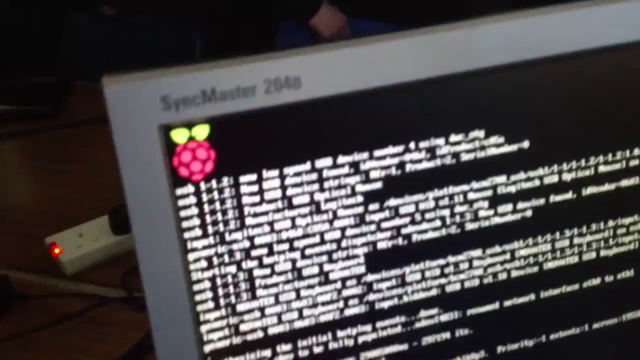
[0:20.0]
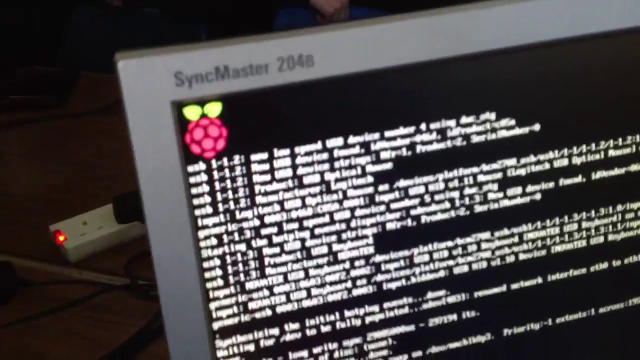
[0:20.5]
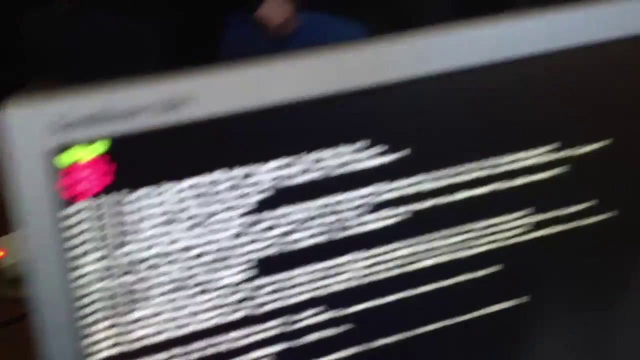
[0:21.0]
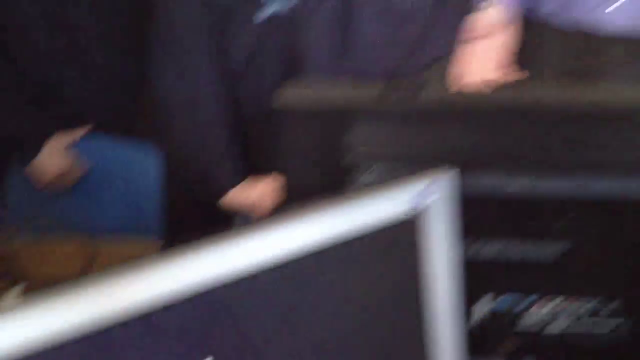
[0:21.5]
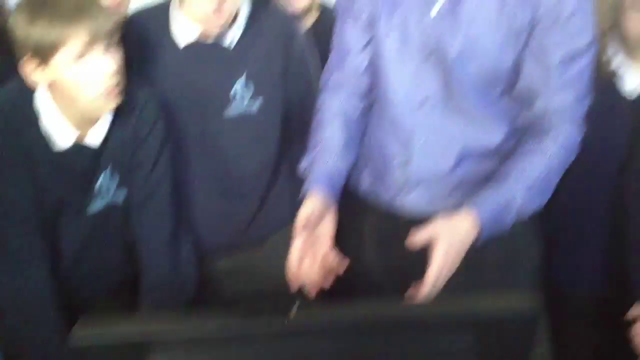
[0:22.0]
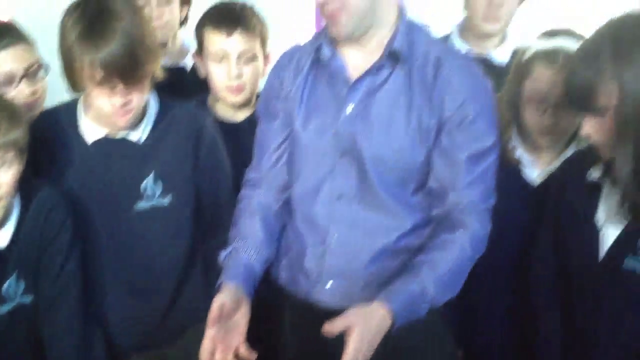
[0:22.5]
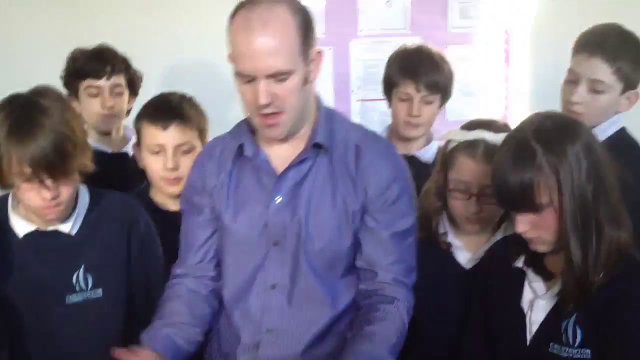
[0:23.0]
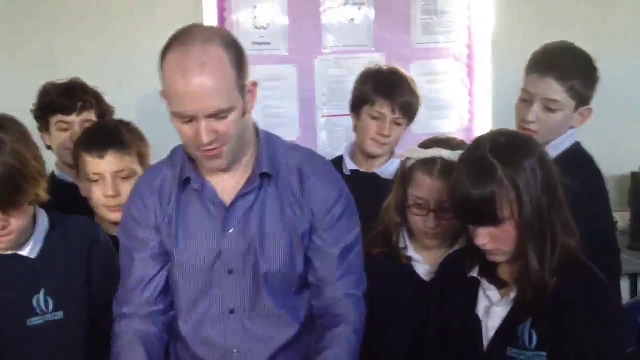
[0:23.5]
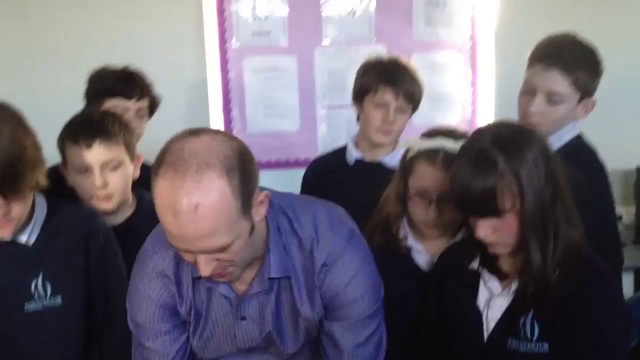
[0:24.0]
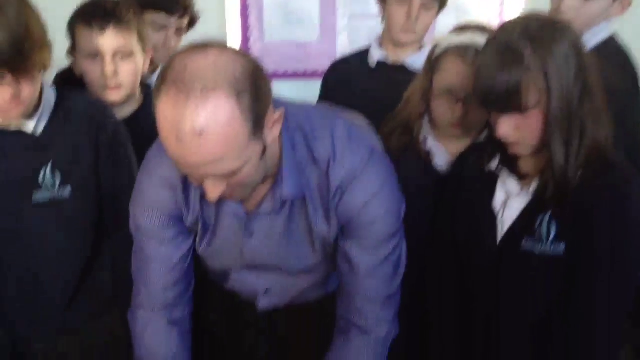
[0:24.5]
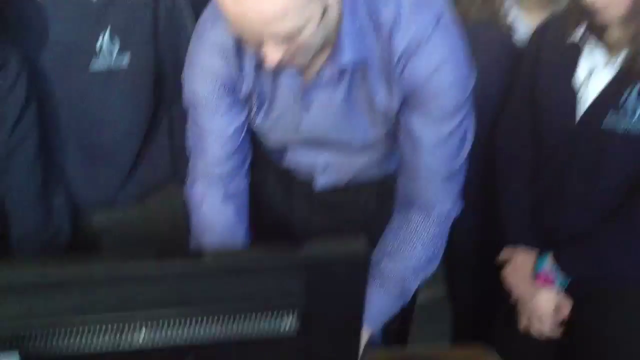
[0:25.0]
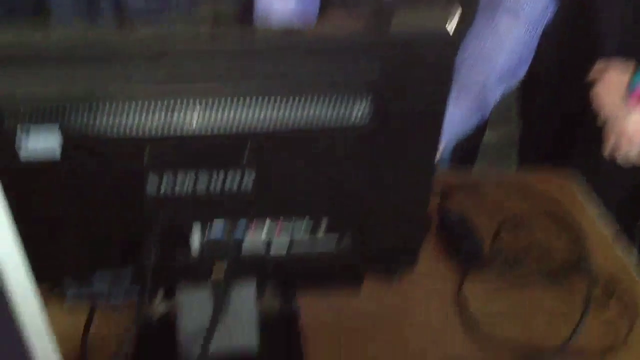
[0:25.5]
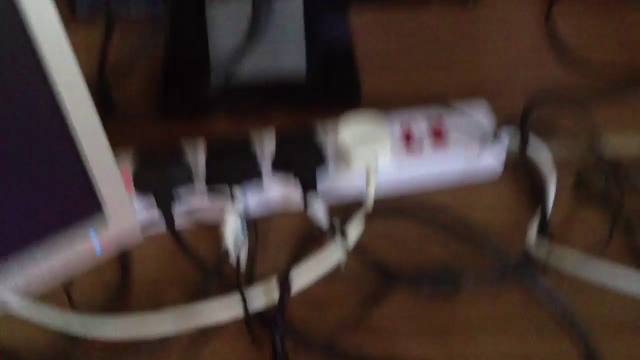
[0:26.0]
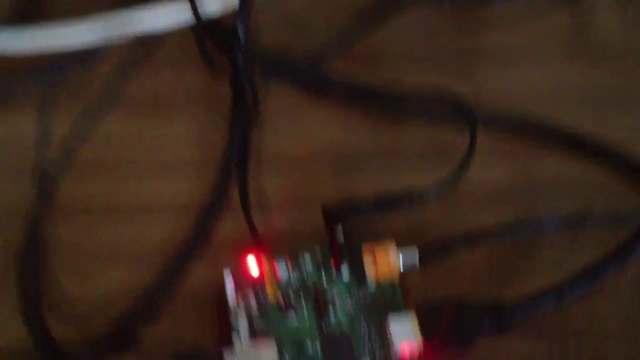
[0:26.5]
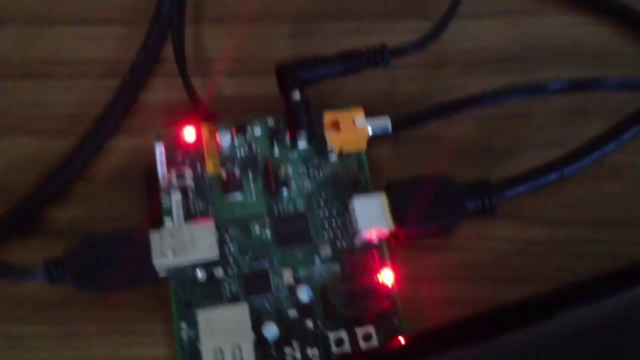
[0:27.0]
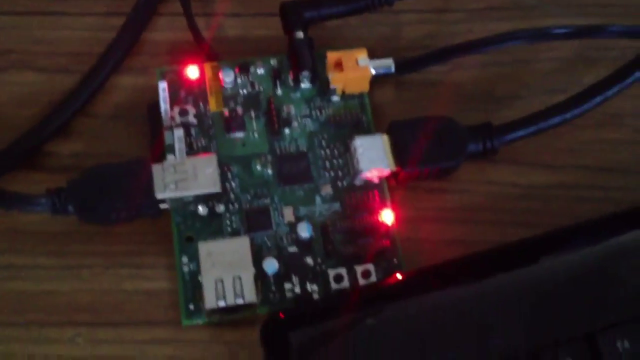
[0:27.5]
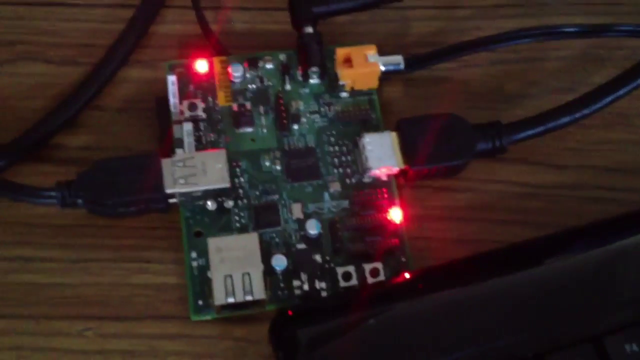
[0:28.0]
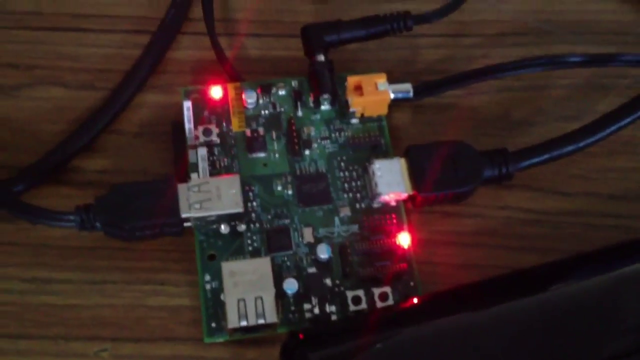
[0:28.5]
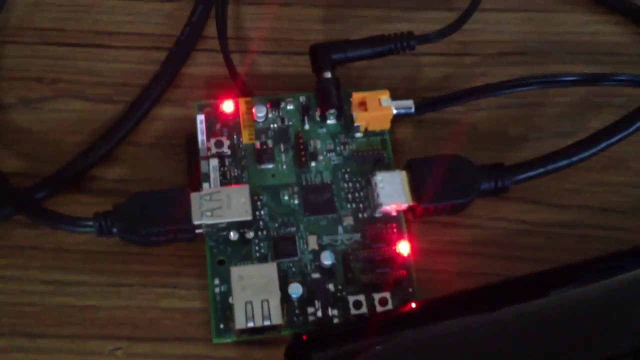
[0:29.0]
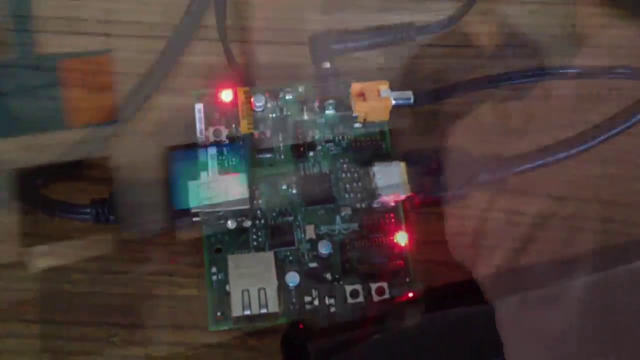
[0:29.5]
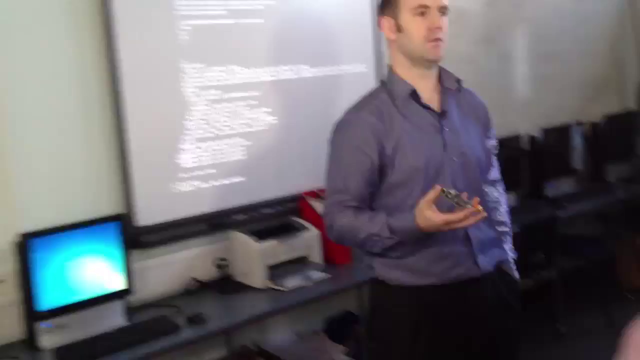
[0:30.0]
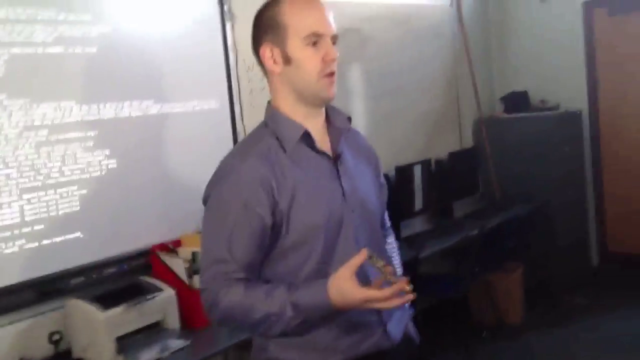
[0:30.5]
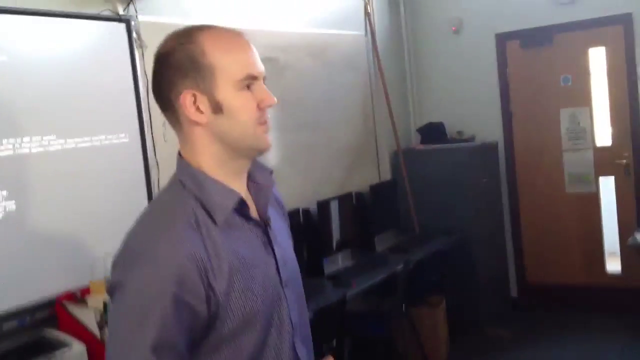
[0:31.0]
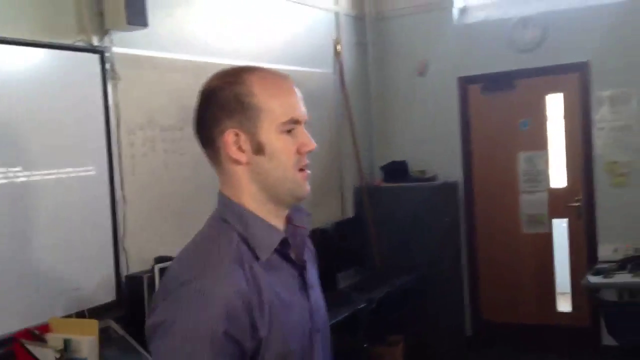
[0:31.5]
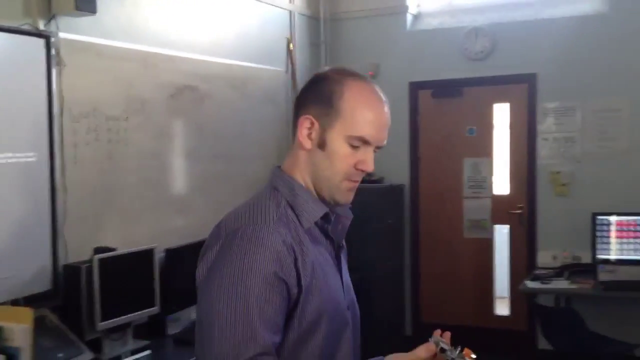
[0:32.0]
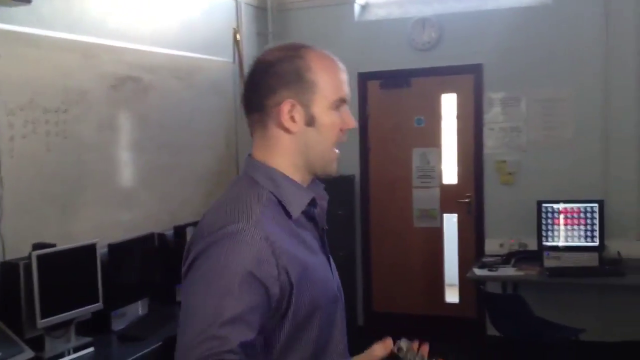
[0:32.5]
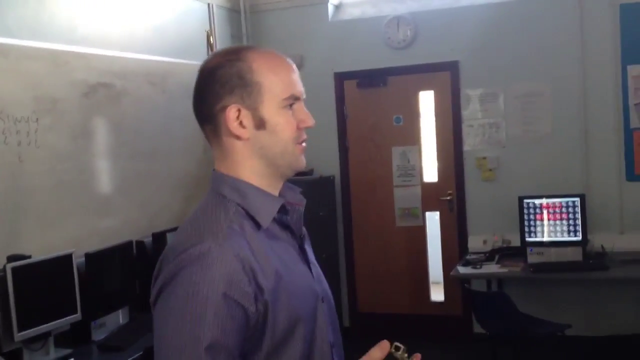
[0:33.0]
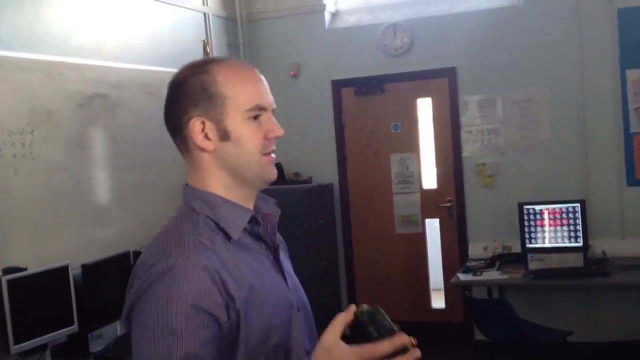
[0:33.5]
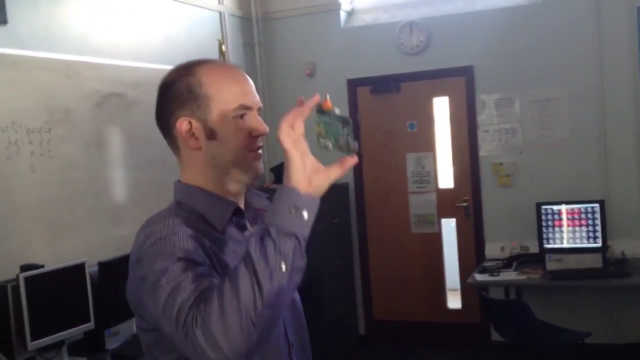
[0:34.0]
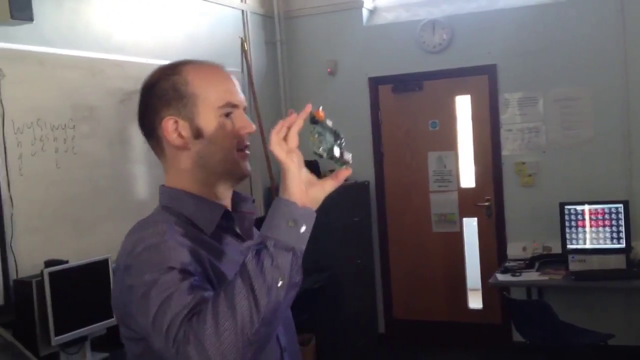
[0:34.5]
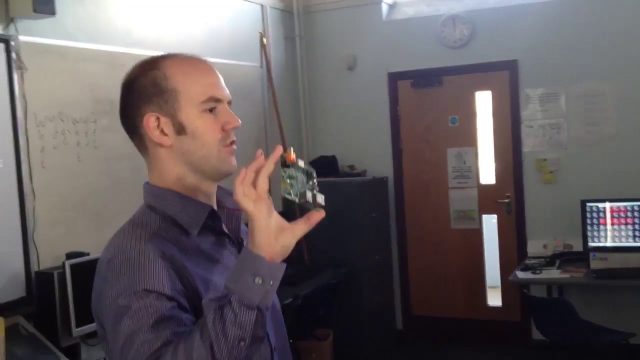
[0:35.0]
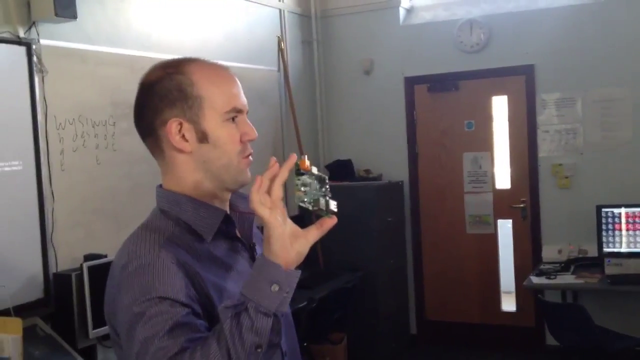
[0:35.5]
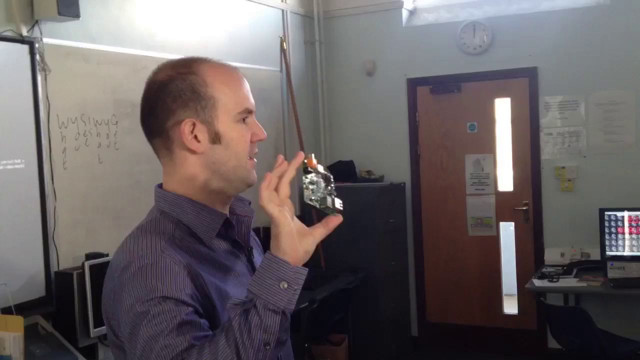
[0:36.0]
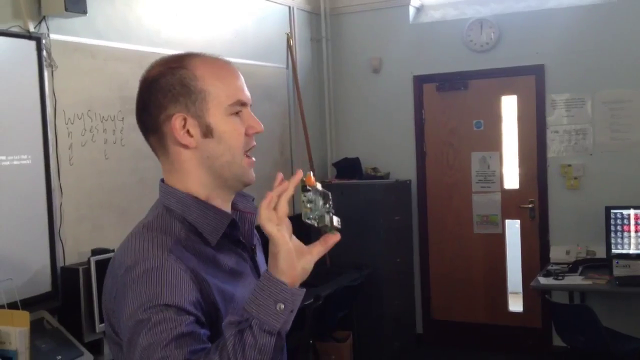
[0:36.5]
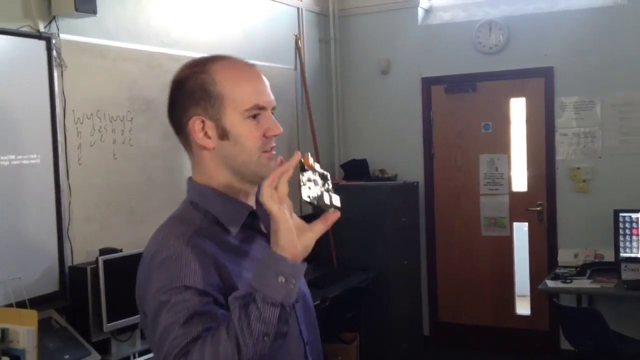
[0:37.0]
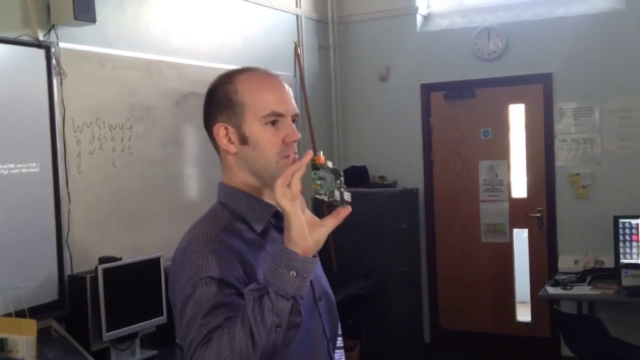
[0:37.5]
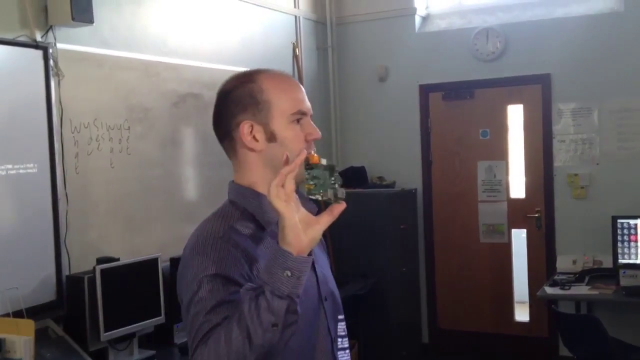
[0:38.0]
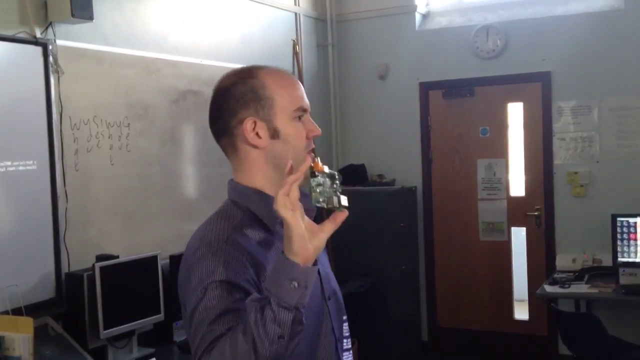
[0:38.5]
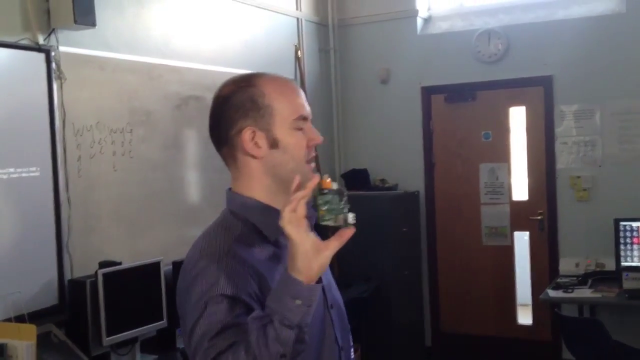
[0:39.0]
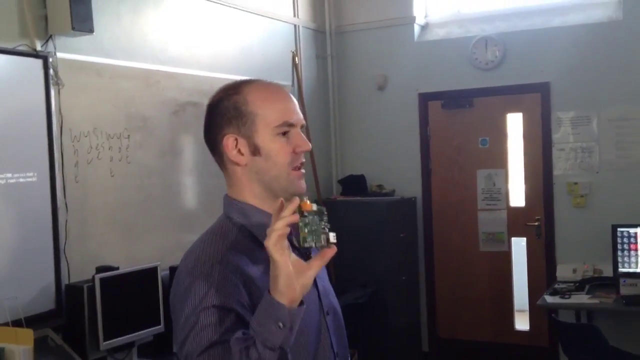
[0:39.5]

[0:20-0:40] The camera hovers back up to the teacher, who is talking. He has a receding hairline, a tall forehead and a blue button-up shirt. He reaches down and types in front of a desktop, and the camera zooms behind the computer to a little circuit board, where two lights light up red. The video cuts to the teacher standing in front of a projector with the coding or directions on the screen. He stands with his left hand in his pocket and his right hand palm up, addressing the class. He looks down, looks up, and holds up the circuit board with his right hand, his head moving slightly from left to right as he looks at the whole classroom. The class is co-ed, with boys and girls, and there are computer monitors everywhere. To his left is the entrance door with a little window pane, and a lot of sunlight spills into the room, making the video somewhat bright.